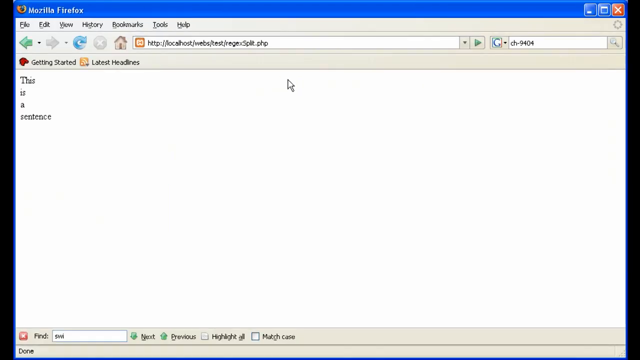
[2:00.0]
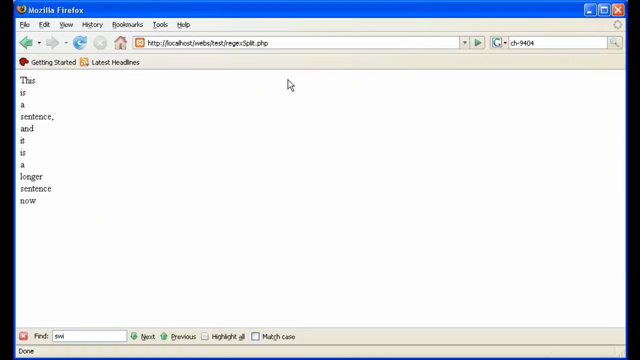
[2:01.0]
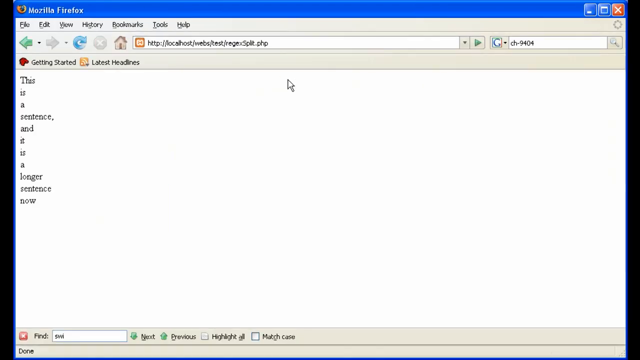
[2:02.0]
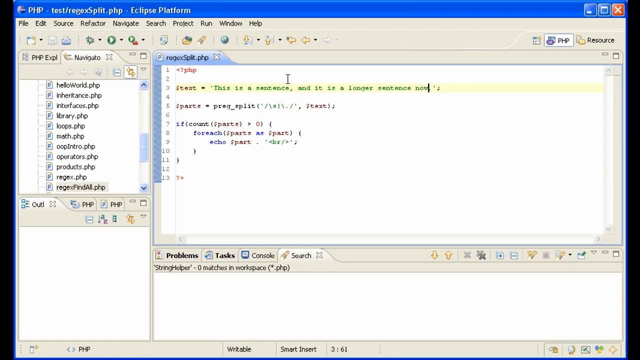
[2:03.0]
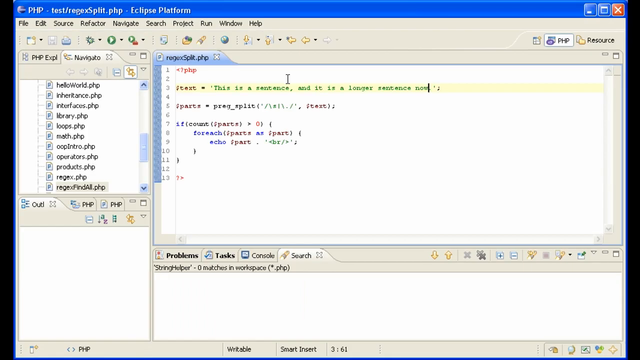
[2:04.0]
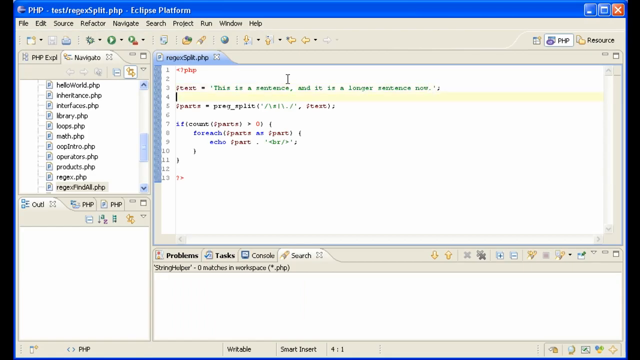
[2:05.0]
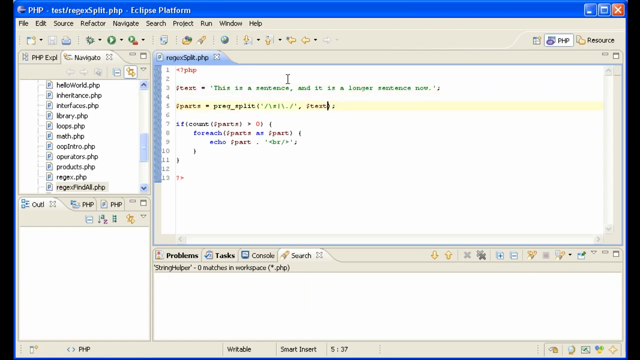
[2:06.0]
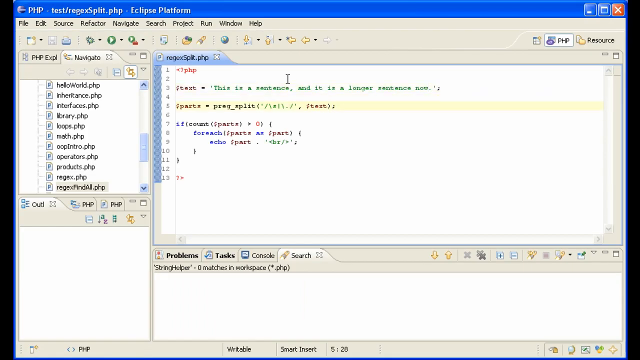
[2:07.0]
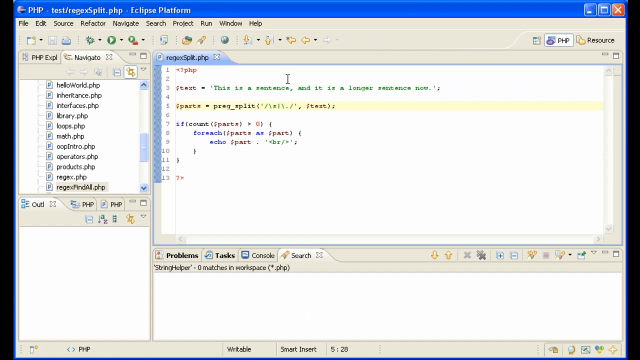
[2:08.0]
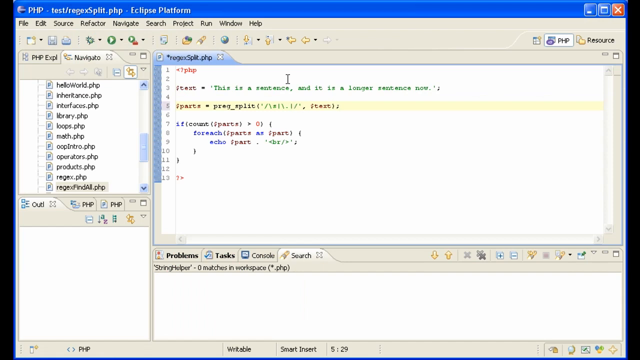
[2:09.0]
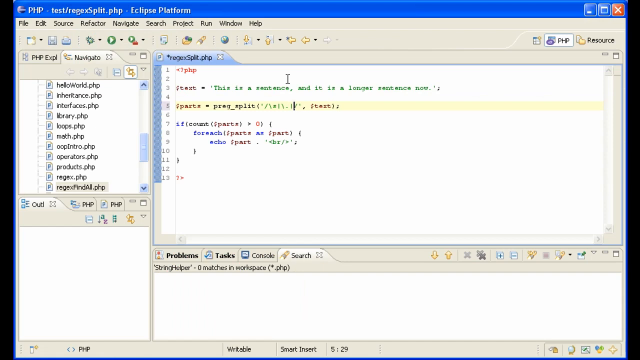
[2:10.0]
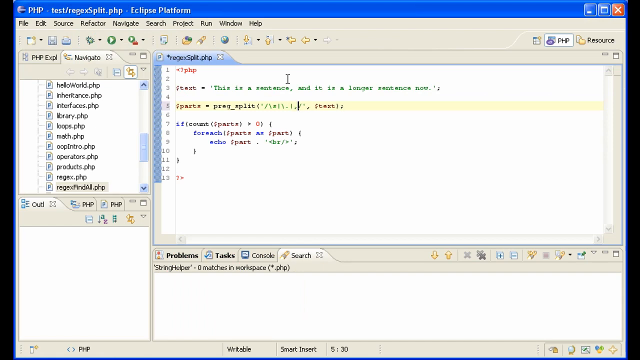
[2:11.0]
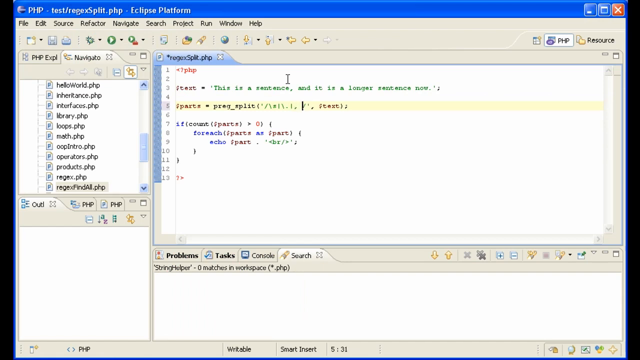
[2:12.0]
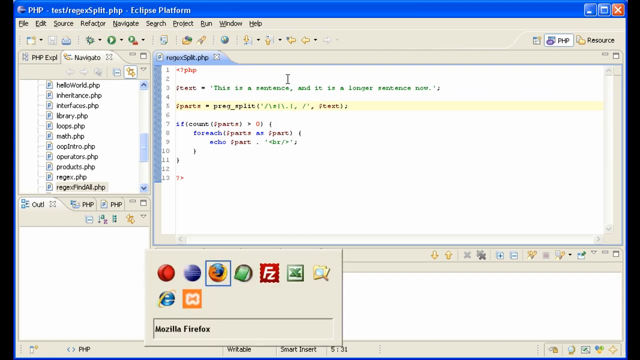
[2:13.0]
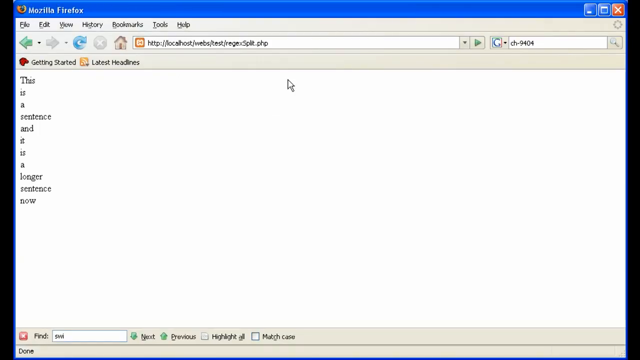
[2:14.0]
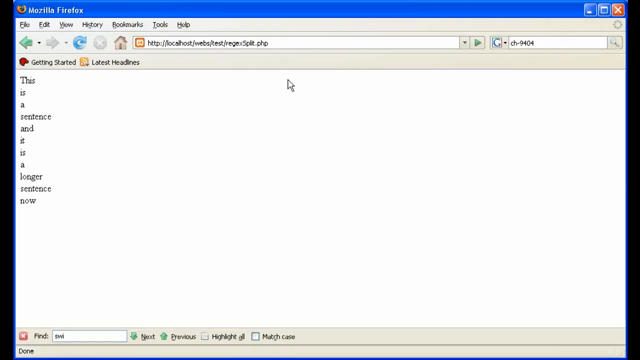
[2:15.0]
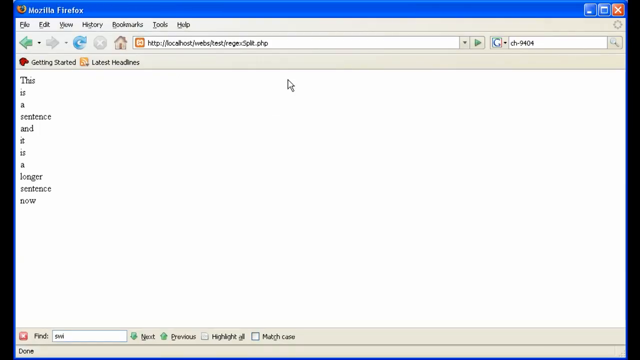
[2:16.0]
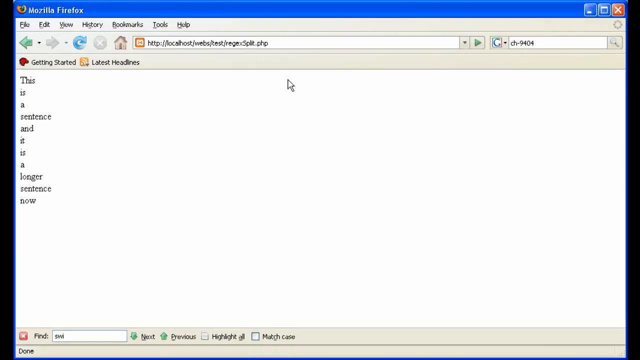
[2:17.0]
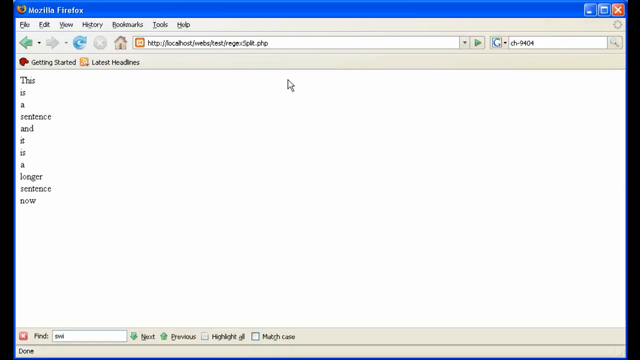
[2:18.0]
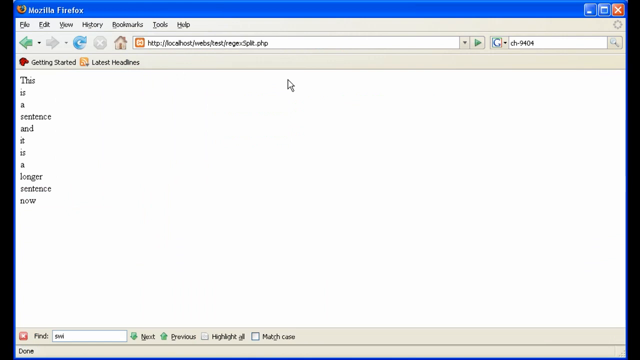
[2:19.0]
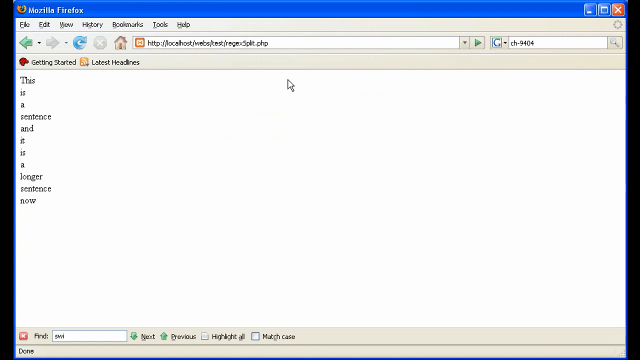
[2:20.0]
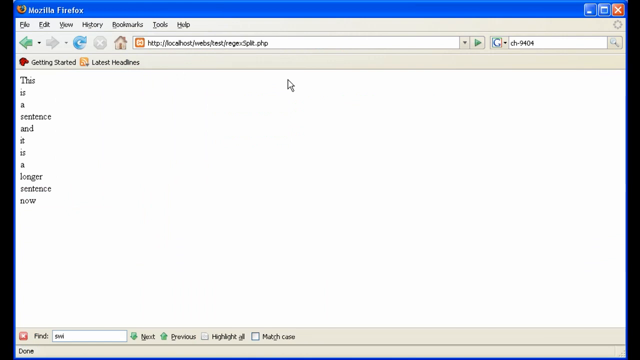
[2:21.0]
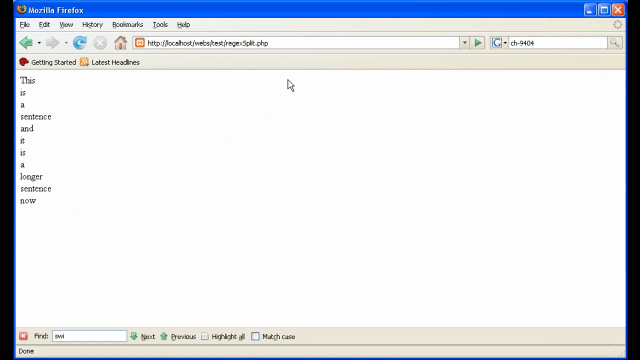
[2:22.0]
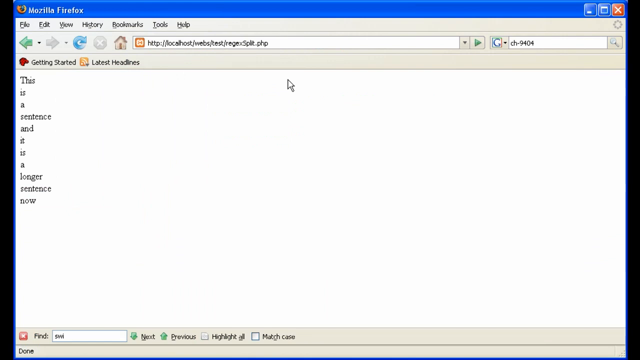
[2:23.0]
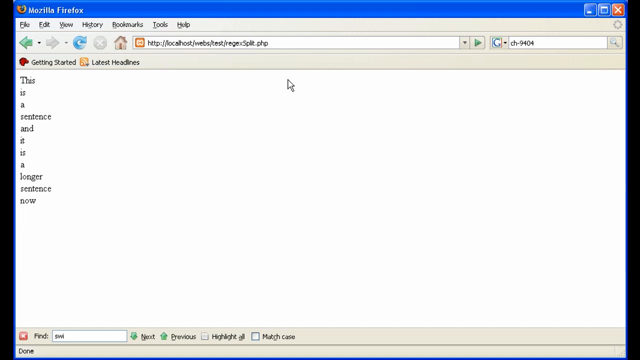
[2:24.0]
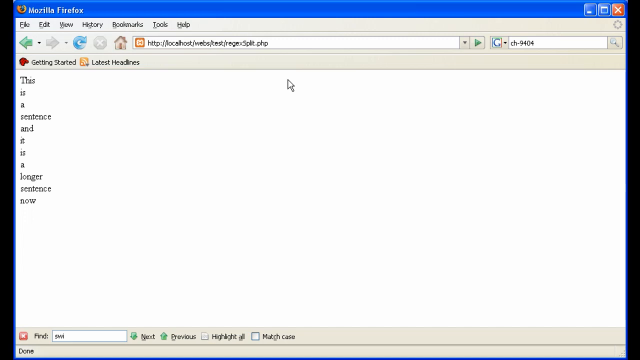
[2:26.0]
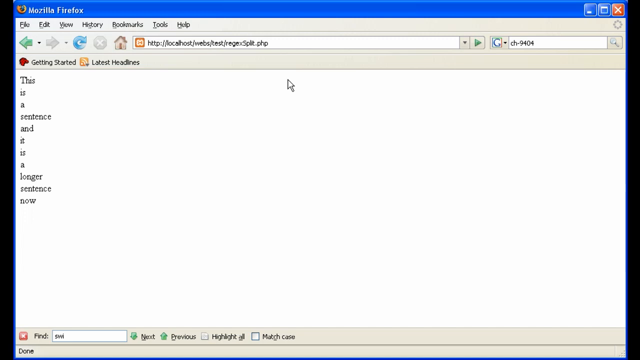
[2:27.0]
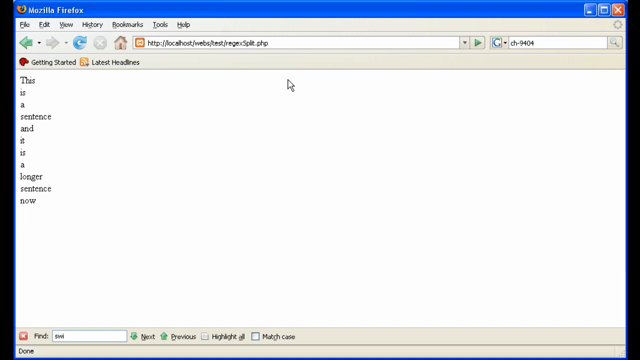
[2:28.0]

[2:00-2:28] After the PHP file is saved, the Mozilla Firefox page is reloaded and the new sentence is printed with each word on a new line. Back in the PHP file, another vertical line is added after the full stop, followed by a comma, seemingly to remove the punctuation marks from the output. When the page is reloaded, Firefox shows "this is a sentence and it is a longer sentence now" without punctuation marks. The video ends with this webpage, and nothing else is demonstrated.